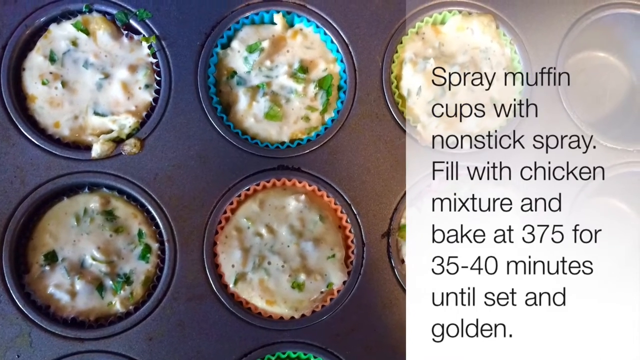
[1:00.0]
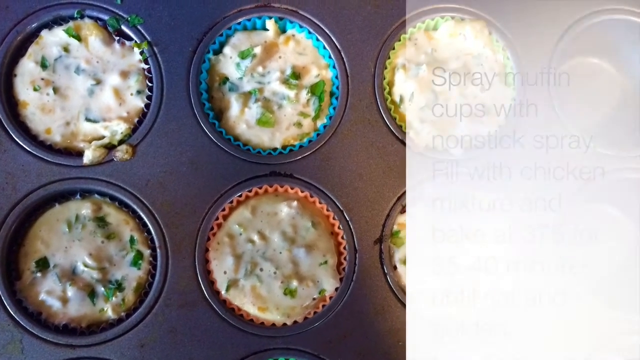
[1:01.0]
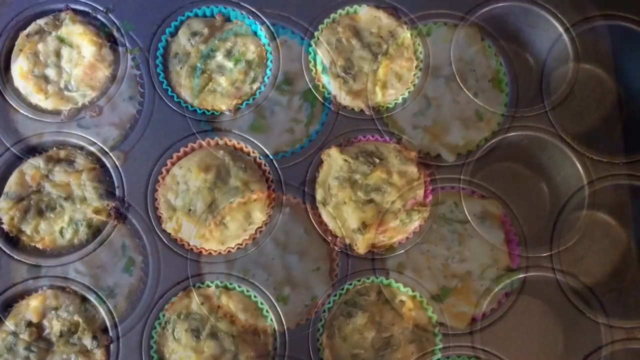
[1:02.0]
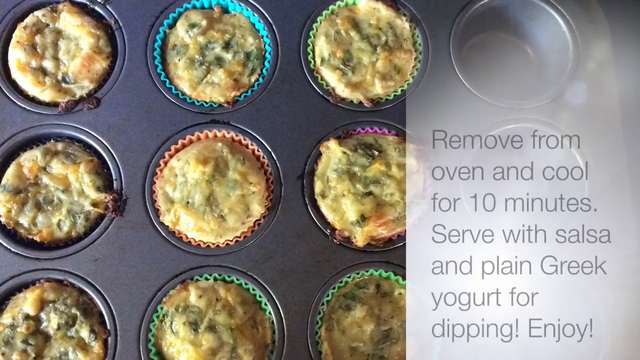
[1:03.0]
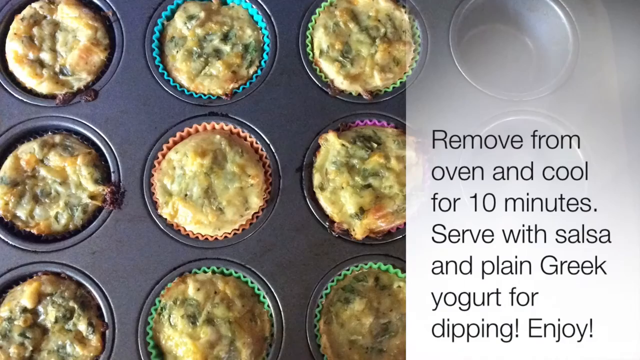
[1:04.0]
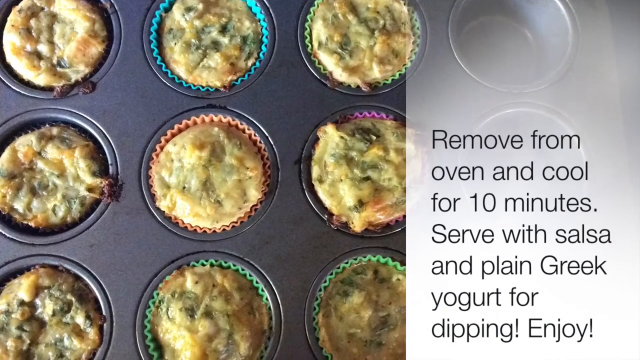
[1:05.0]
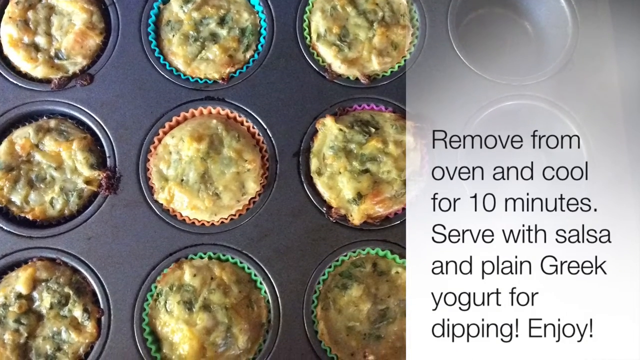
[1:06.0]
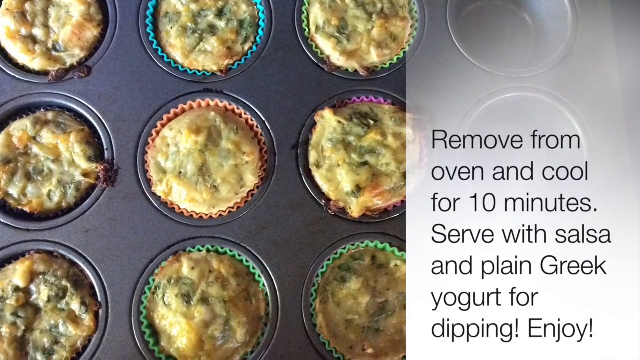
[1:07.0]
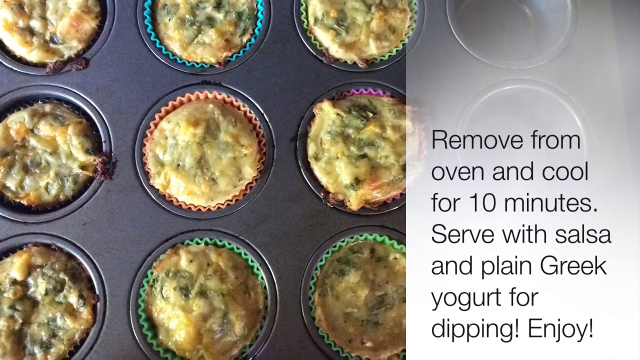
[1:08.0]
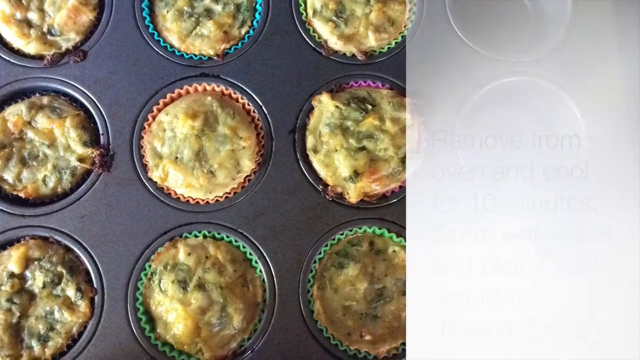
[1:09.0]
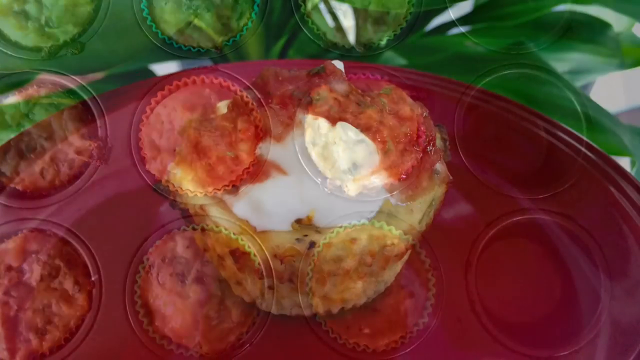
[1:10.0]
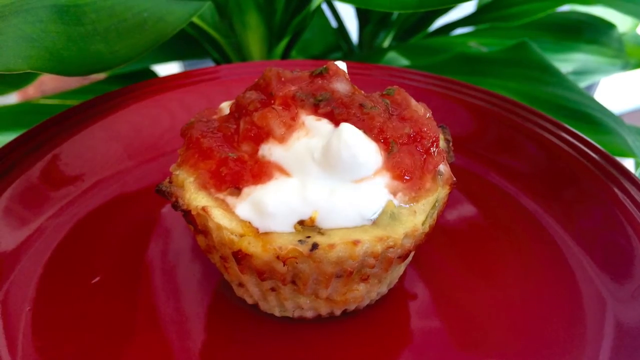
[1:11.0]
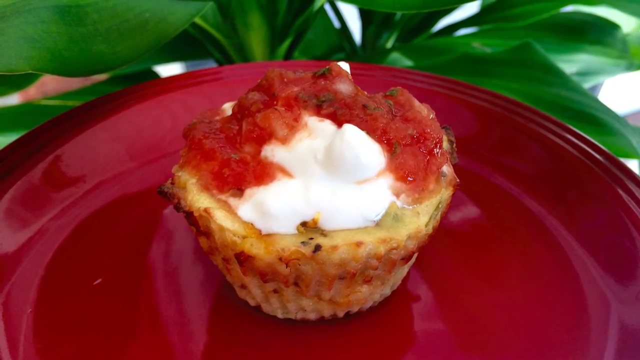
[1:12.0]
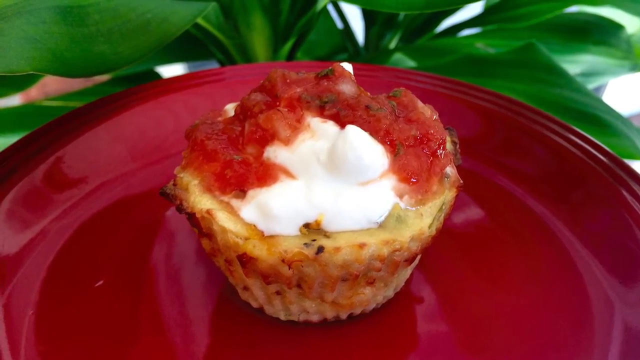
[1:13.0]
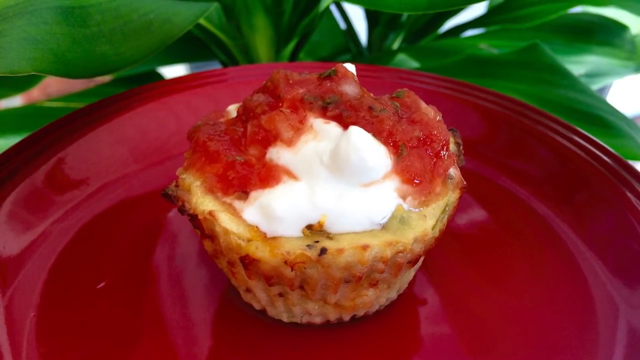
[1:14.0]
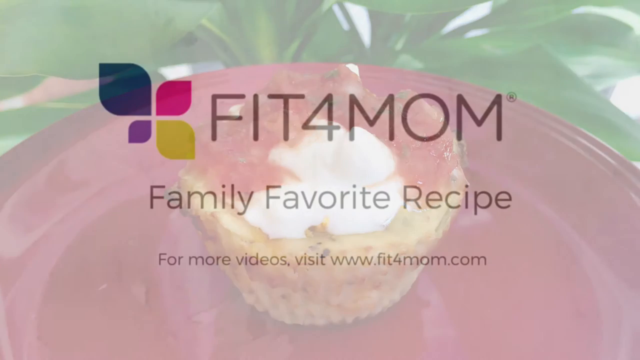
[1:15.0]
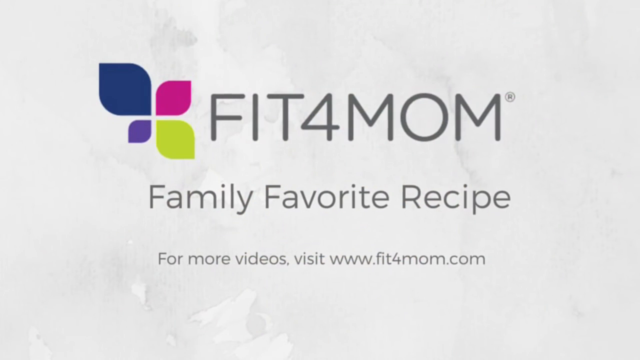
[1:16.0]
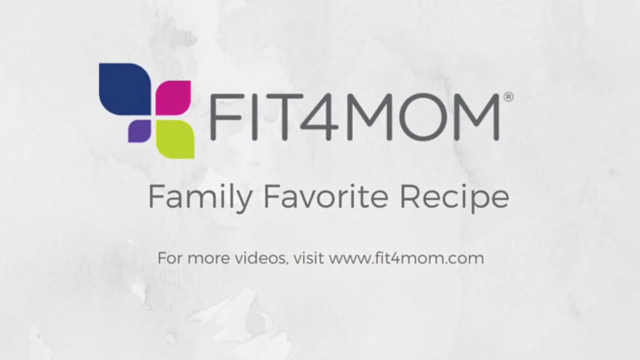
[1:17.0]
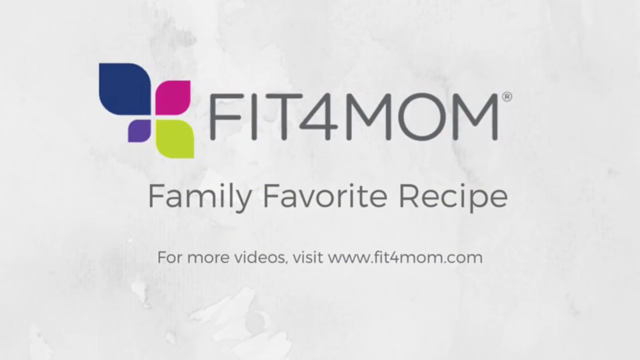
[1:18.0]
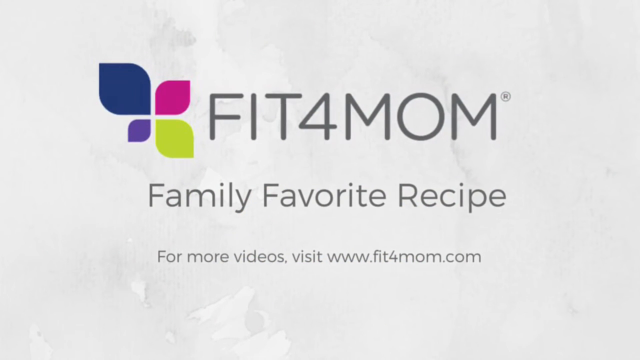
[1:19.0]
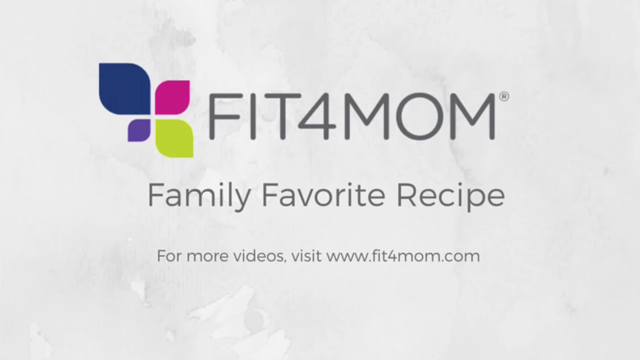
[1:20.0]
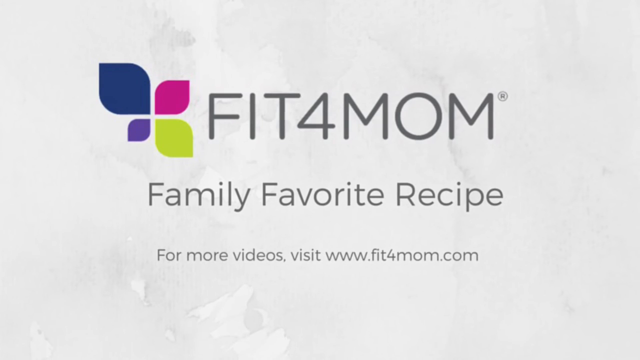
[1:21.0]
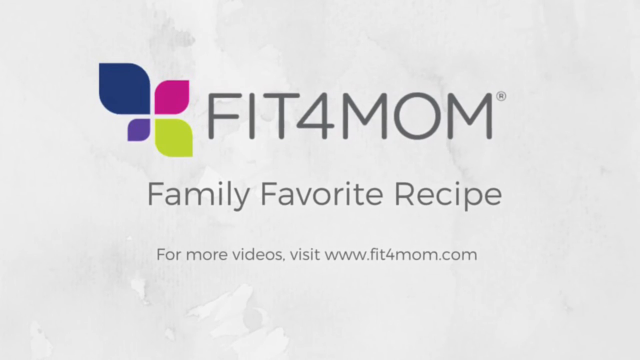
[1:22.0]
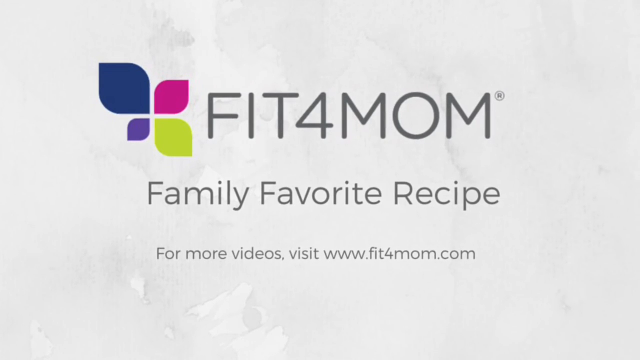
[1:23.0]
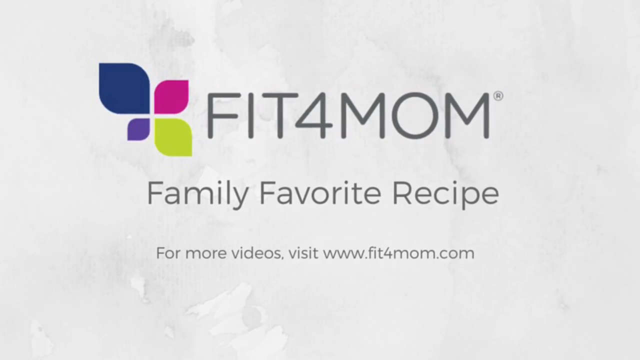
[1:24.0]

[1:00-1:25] The last three cups of the tin don't look like they have anything in them. Text says "remove from the oven and cool for 10 minutes and serve with salsa and plain greek yogurt". A muffin is then shown on top of a red plate with greenery behind it. Text reads "fit for mom family favorite recipe" and "for more videos visit www.fitformom.com", alongside a logo of four different leaves in blue, pink, purple and yellow. The finished muffins are a more tan and brownish color, and there are about nine of them. They are in a round muffin tin that is dark gray rather than black and appears to be nonstick.